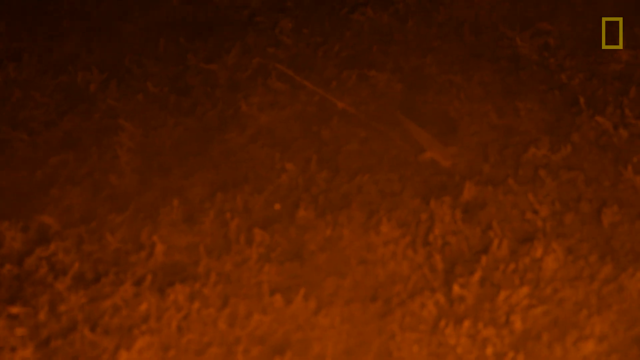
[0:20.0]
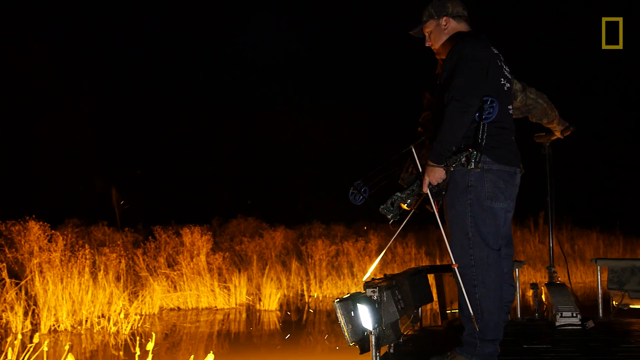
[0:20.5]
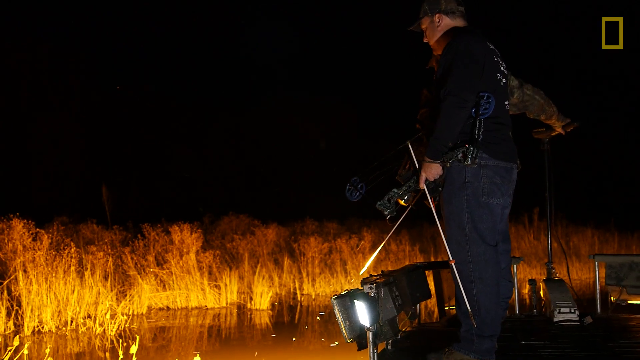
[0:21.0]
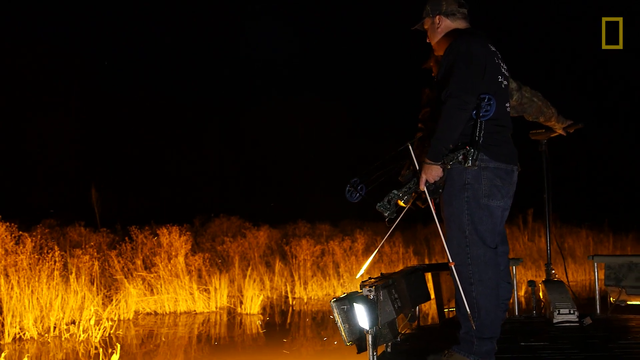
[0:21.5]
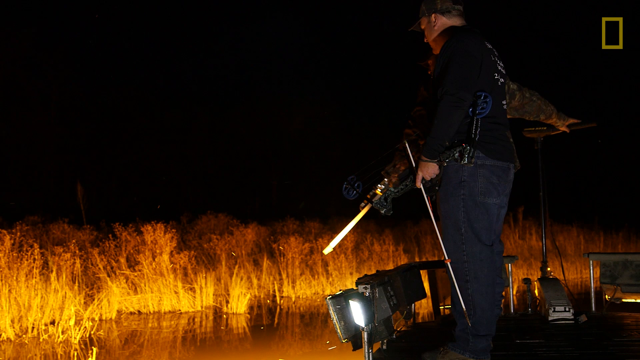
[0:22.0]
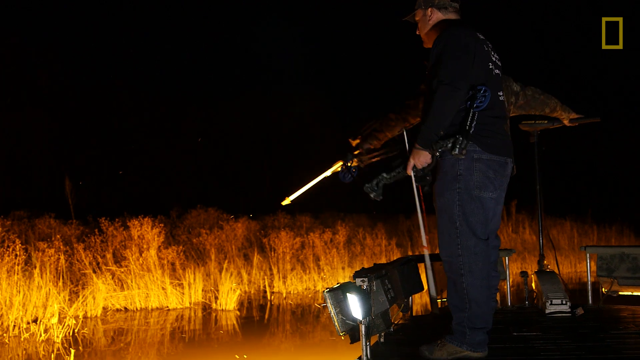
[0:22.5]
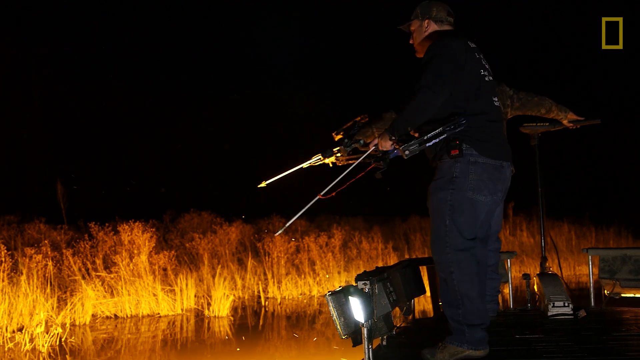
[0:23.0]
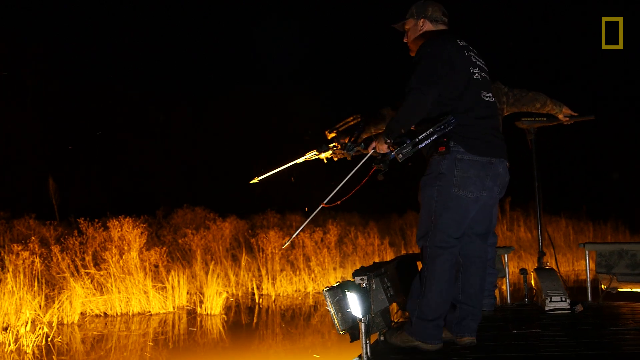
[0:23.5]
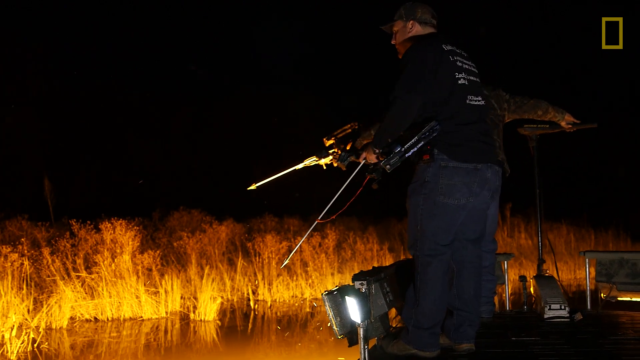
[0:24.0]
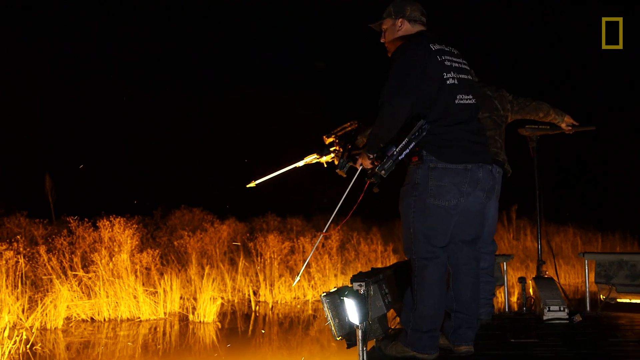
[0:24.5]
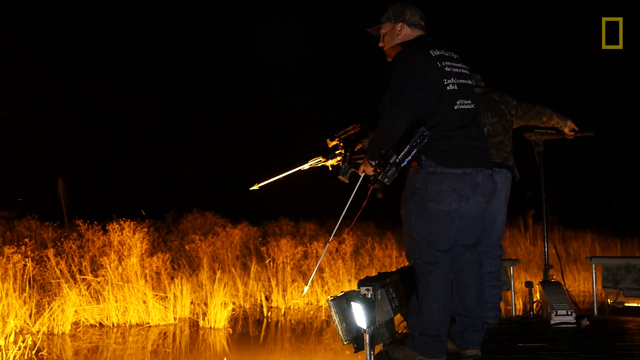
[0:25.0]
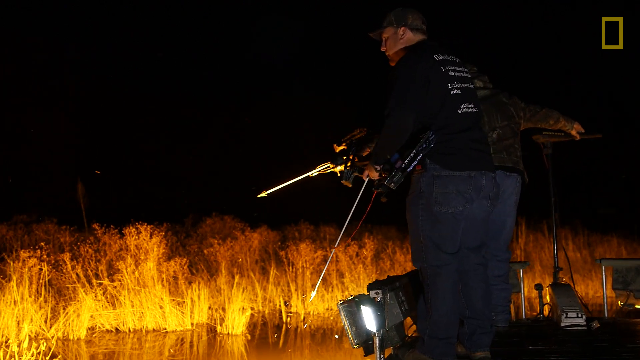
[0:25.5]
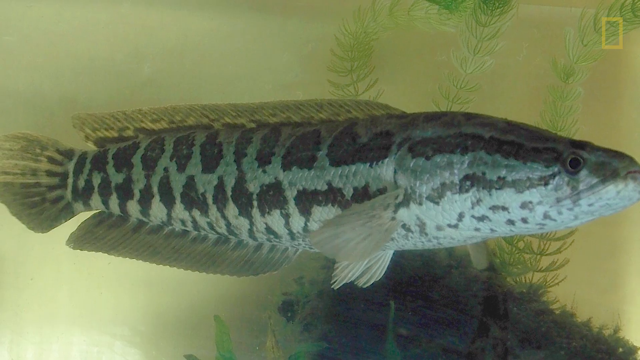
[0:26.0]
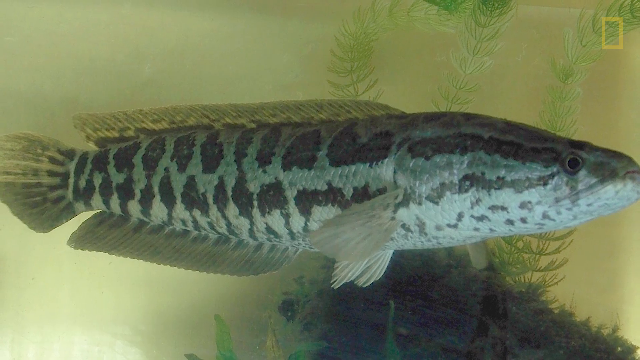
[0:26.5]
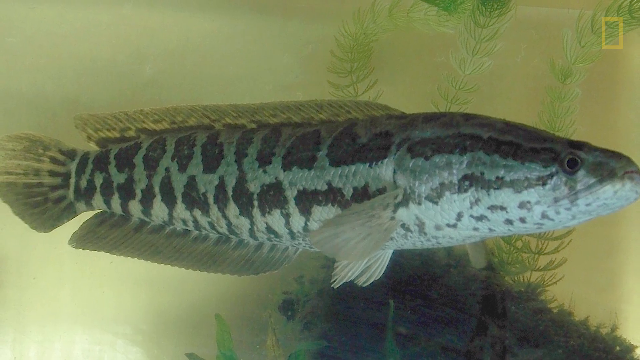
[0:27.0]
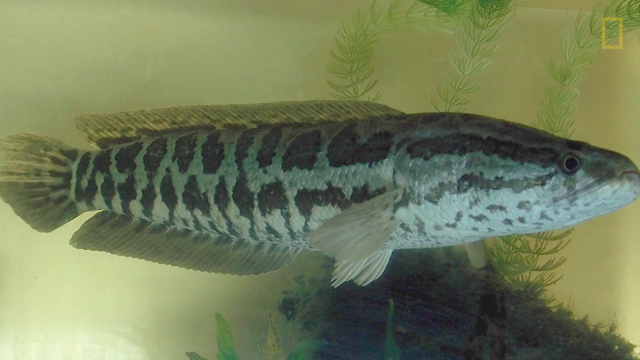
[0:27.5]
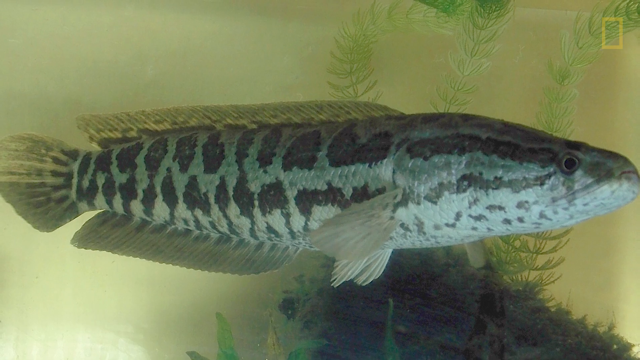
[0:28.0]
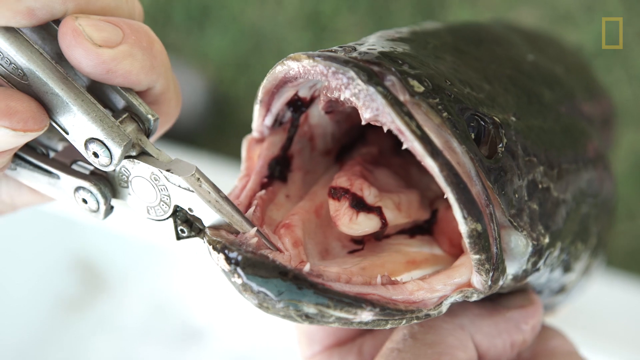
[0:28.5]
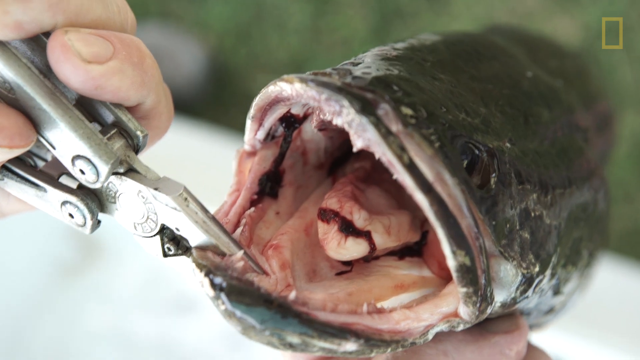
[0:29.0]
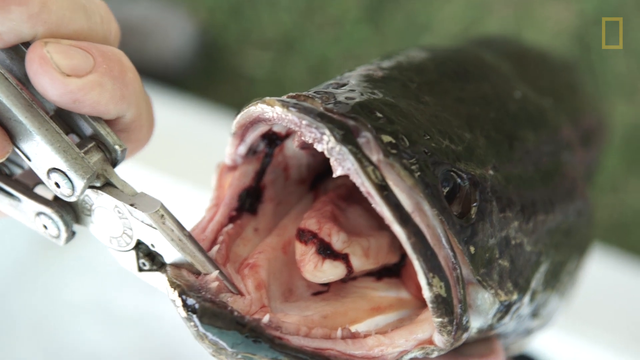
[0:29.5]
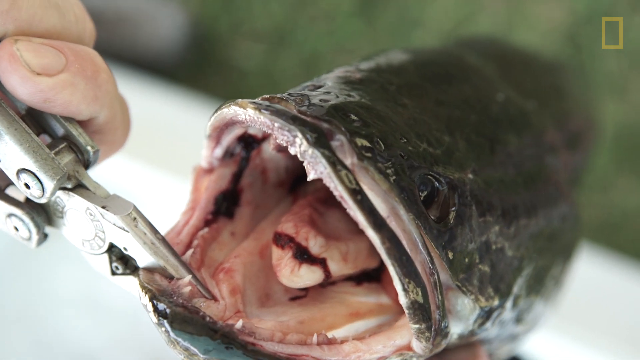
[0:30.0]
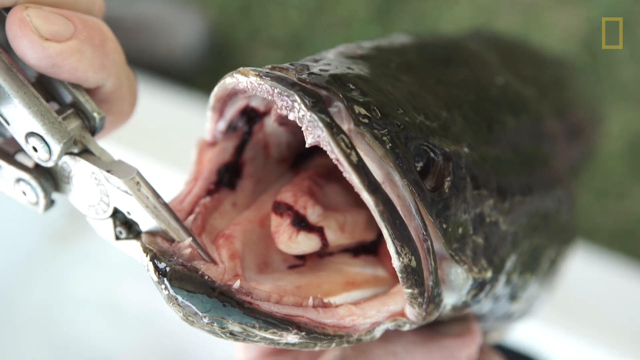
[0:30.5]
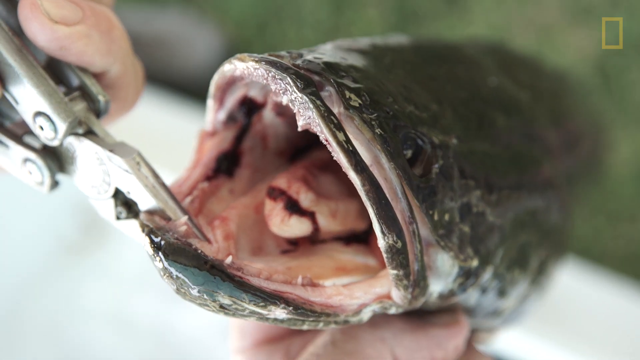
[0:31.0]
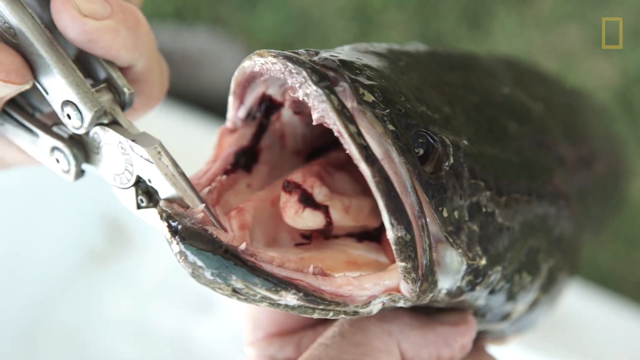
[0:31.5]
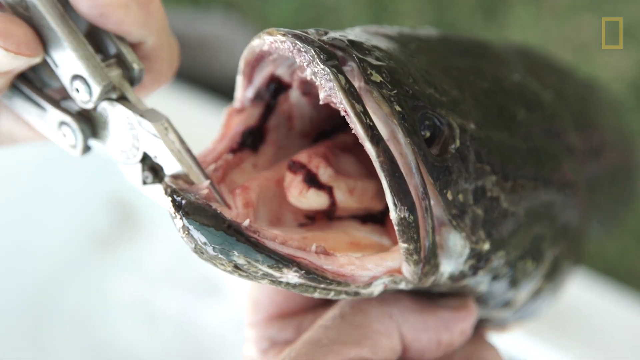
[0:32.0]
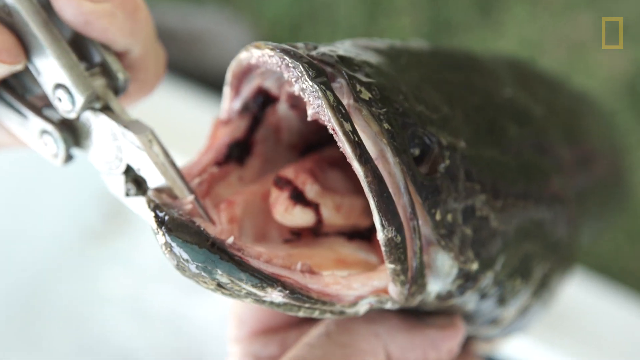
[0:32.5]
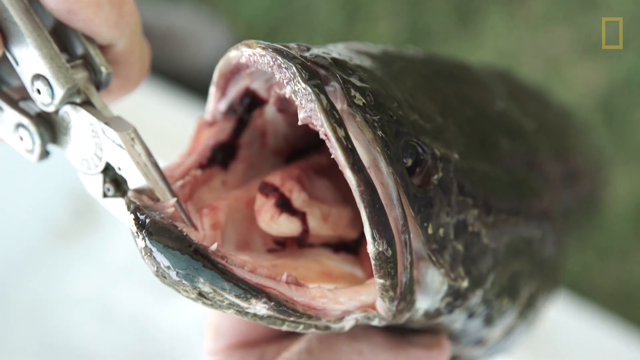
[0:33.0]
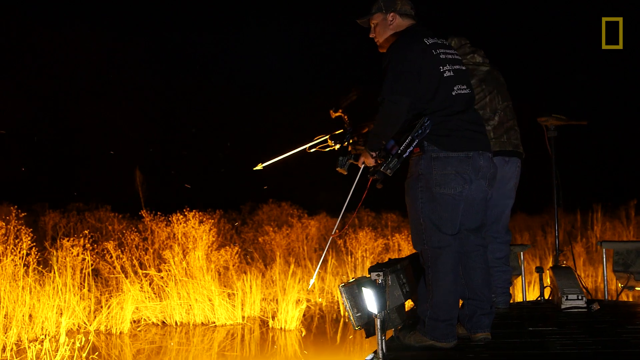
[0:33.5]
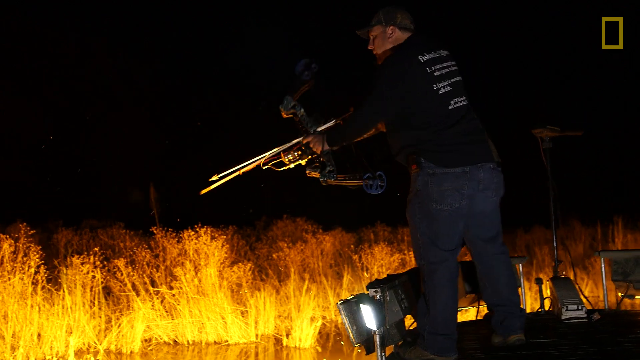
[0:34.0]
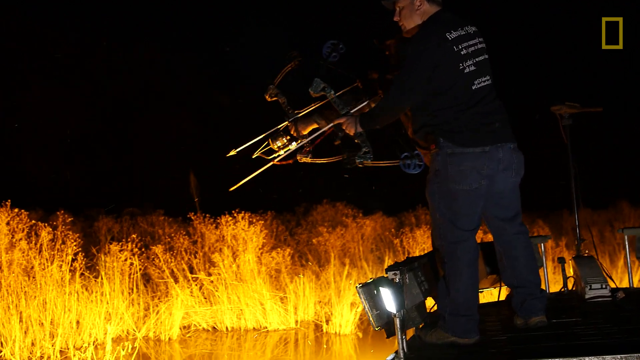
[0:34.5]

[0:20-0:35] The men are shooting darts into the water with dart guns to capture the fish. One man pulls up a fish, and it has something in its mouth that appears to be its tongue, or possibly something it has swallowed whole. On the outside the fish is gray with kind of opalescent scales, darker patterned stripes, and fins.